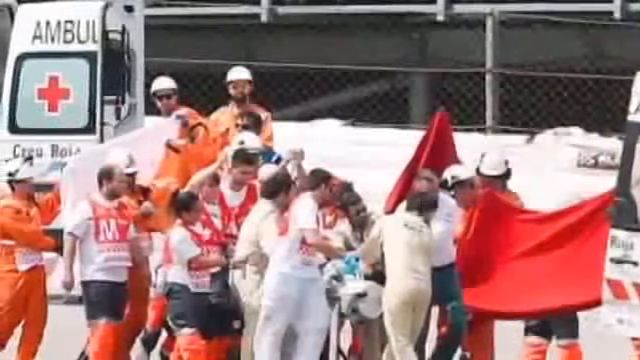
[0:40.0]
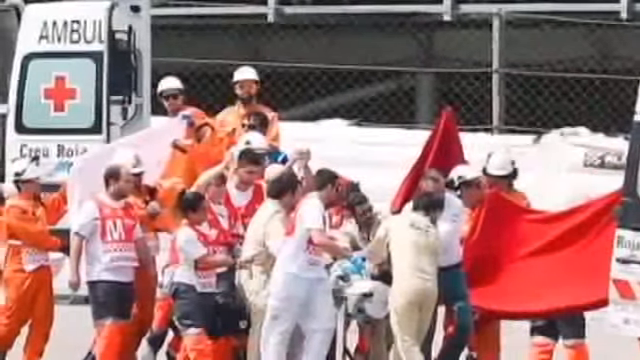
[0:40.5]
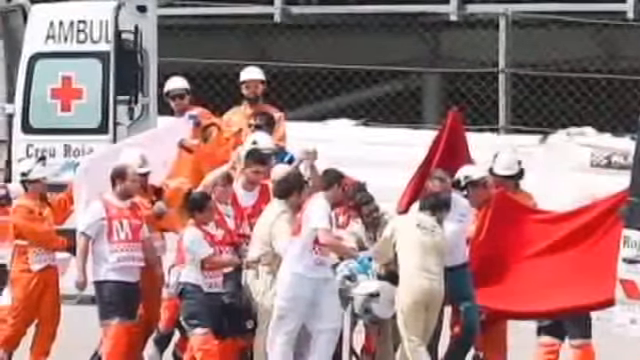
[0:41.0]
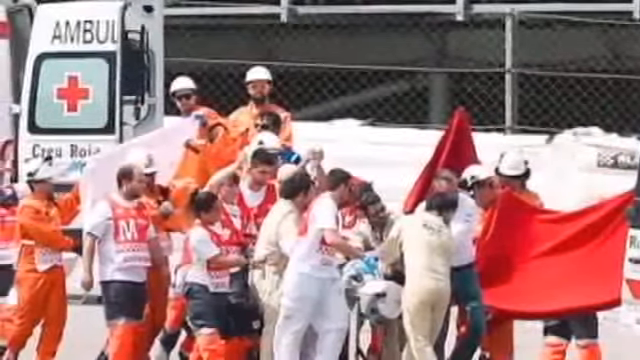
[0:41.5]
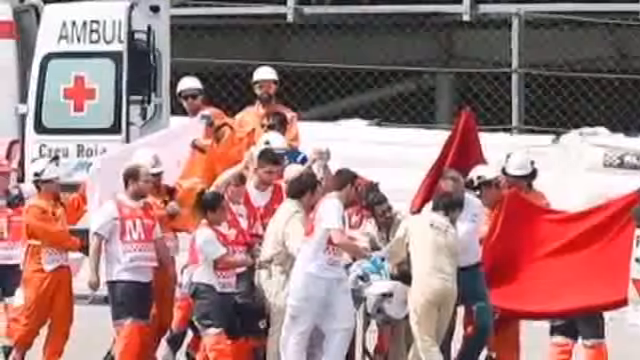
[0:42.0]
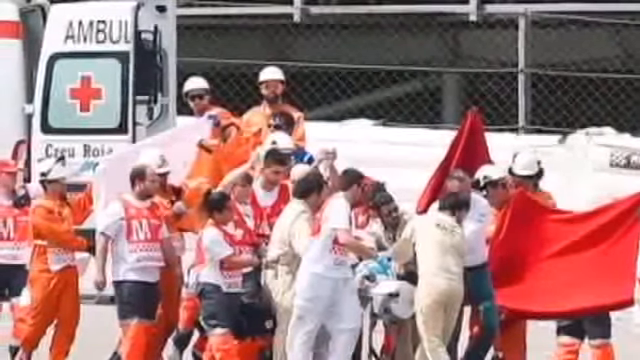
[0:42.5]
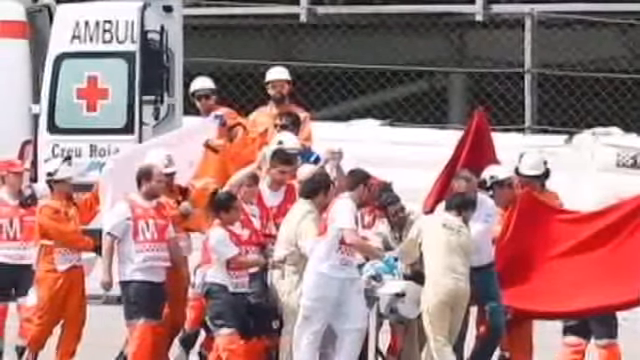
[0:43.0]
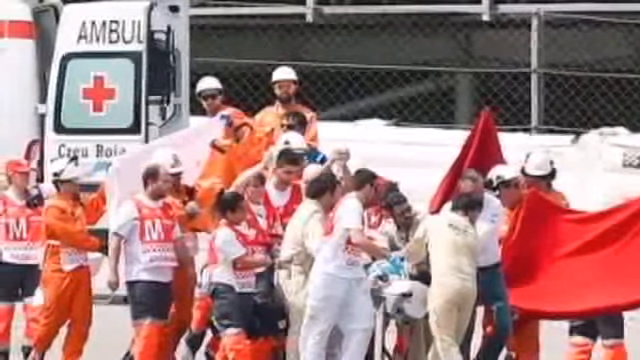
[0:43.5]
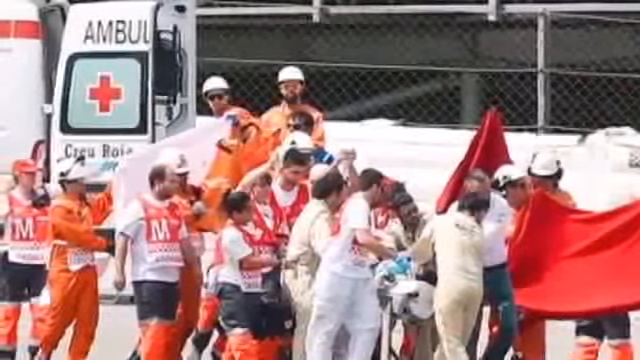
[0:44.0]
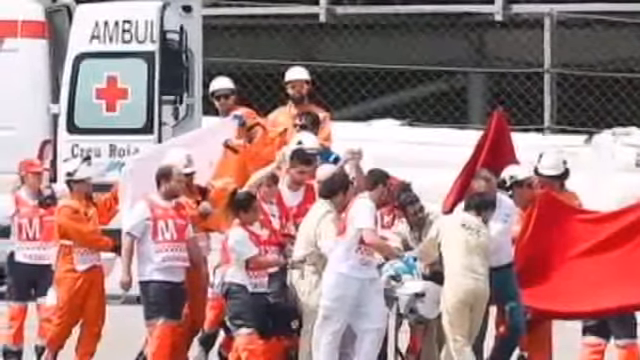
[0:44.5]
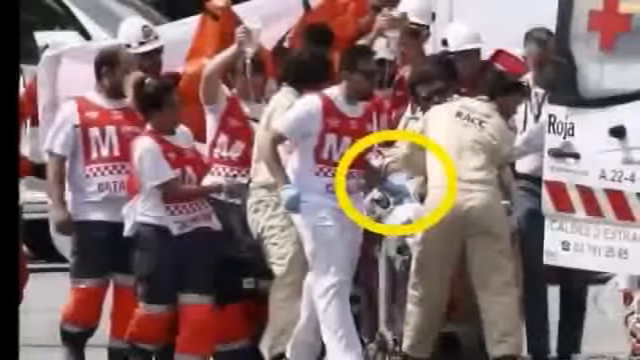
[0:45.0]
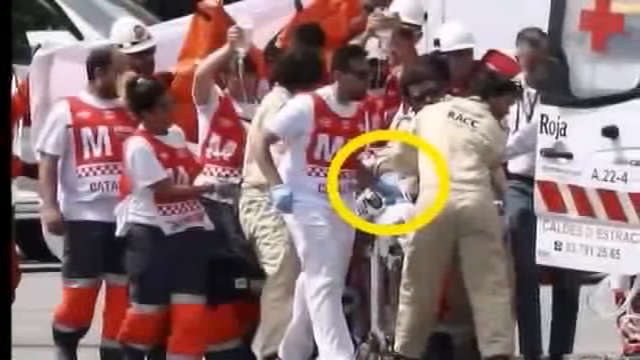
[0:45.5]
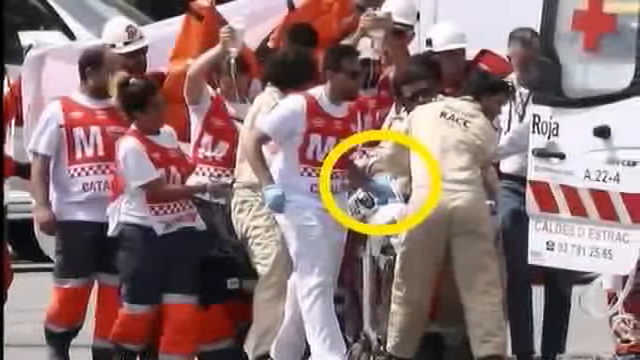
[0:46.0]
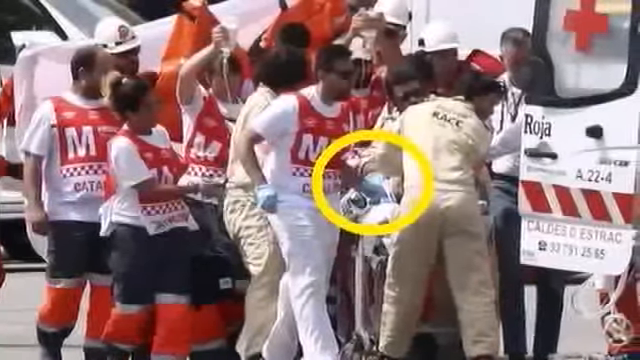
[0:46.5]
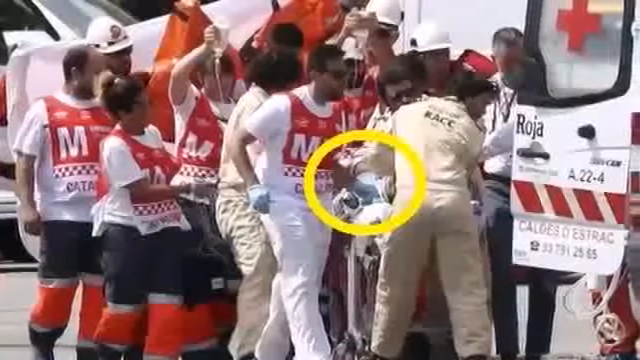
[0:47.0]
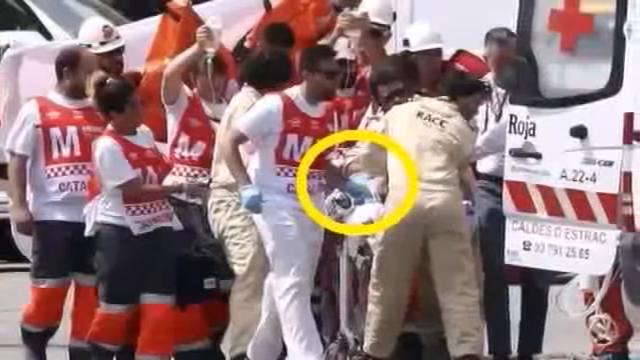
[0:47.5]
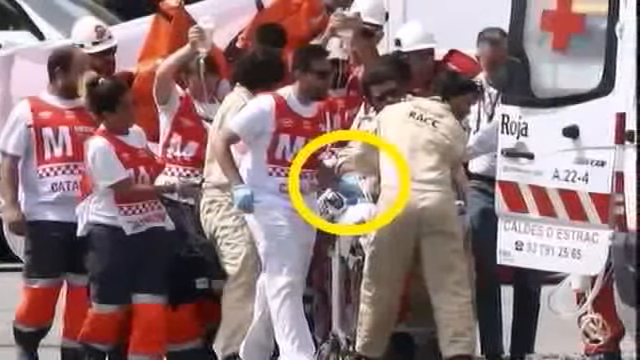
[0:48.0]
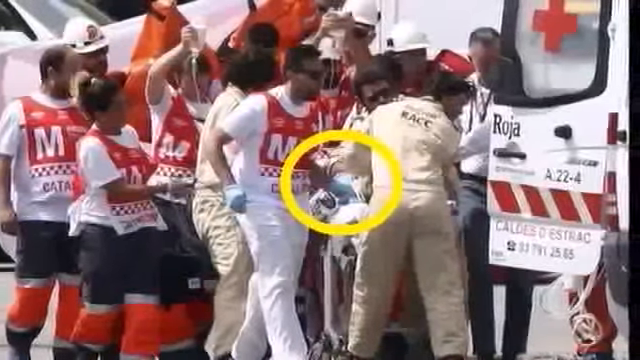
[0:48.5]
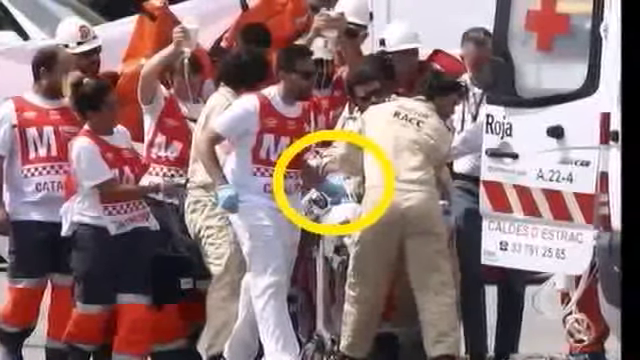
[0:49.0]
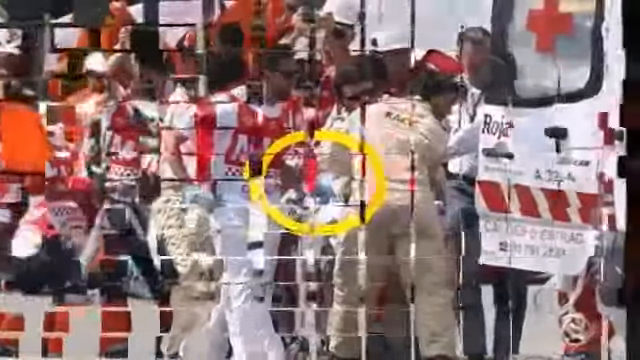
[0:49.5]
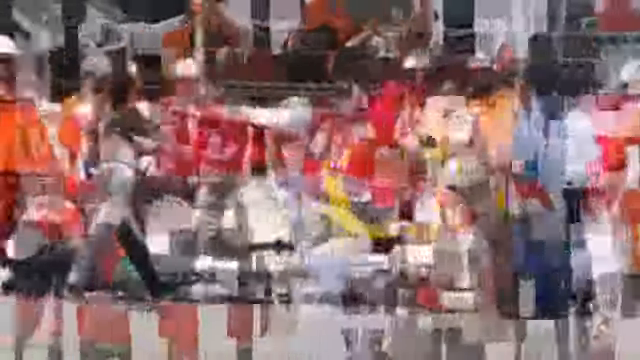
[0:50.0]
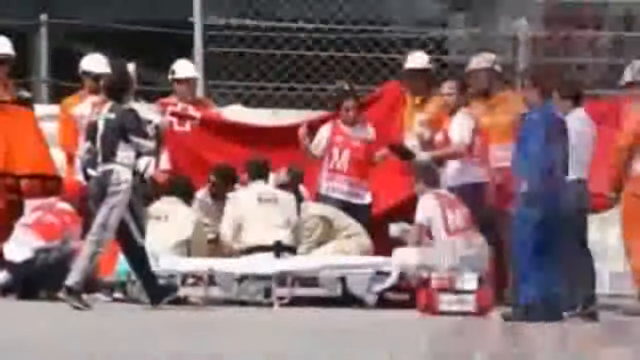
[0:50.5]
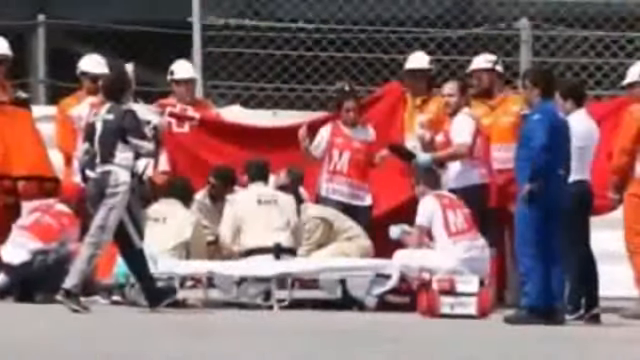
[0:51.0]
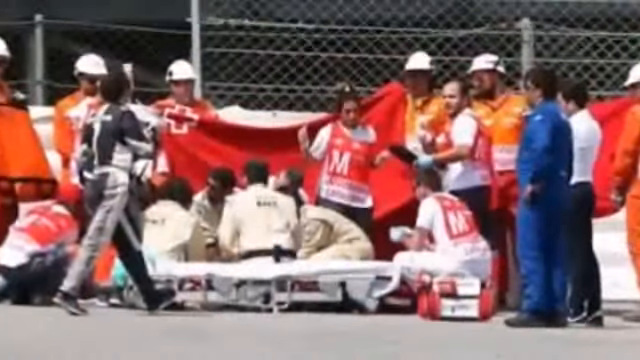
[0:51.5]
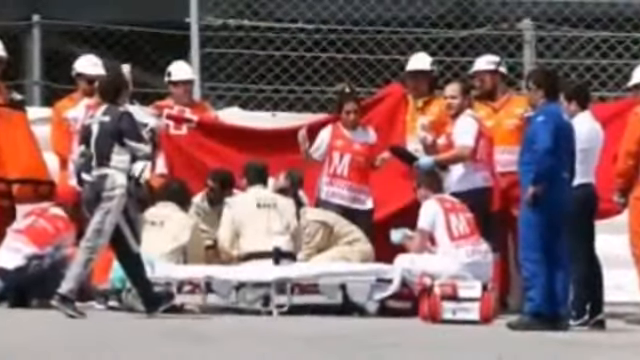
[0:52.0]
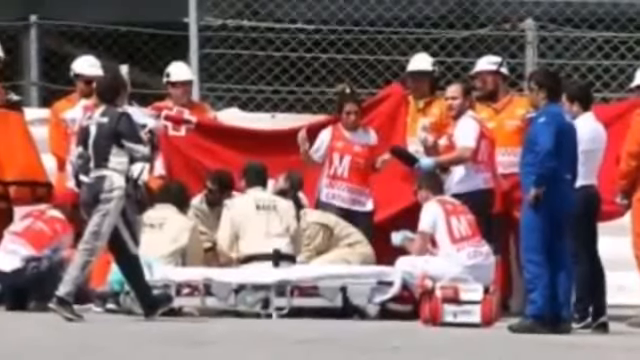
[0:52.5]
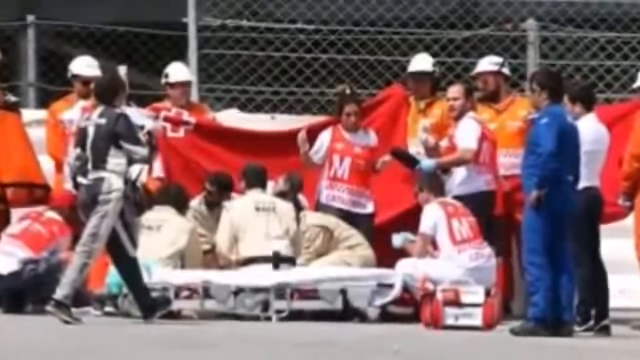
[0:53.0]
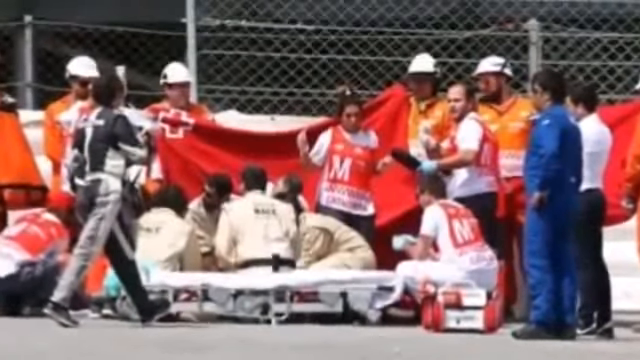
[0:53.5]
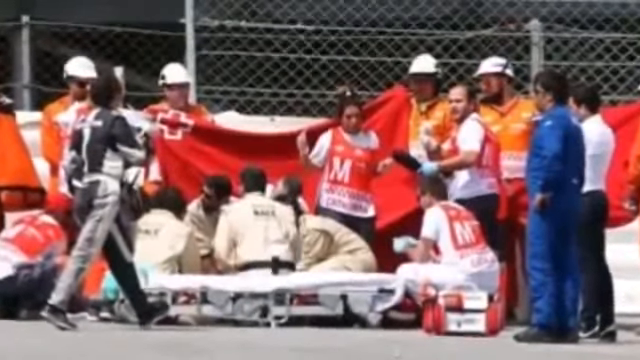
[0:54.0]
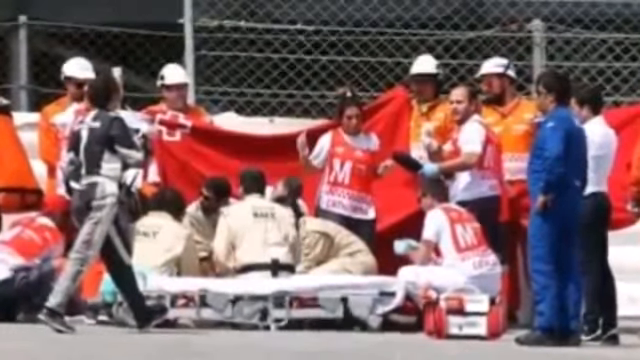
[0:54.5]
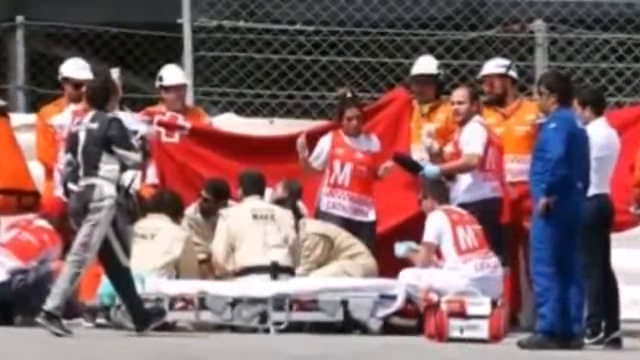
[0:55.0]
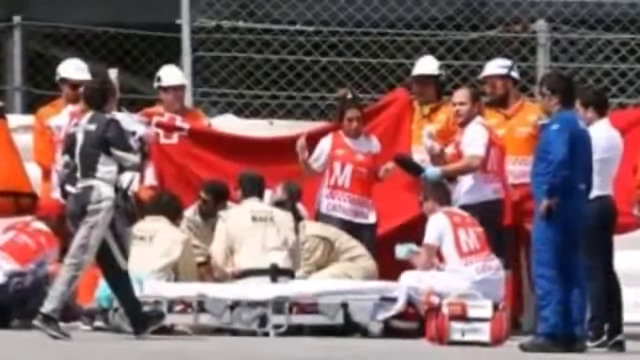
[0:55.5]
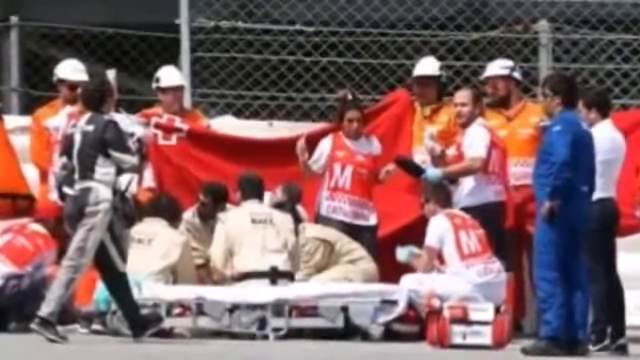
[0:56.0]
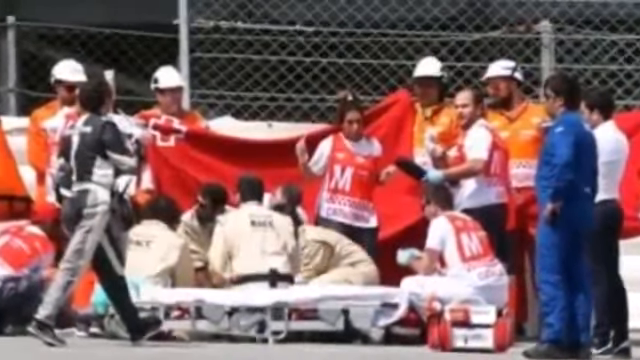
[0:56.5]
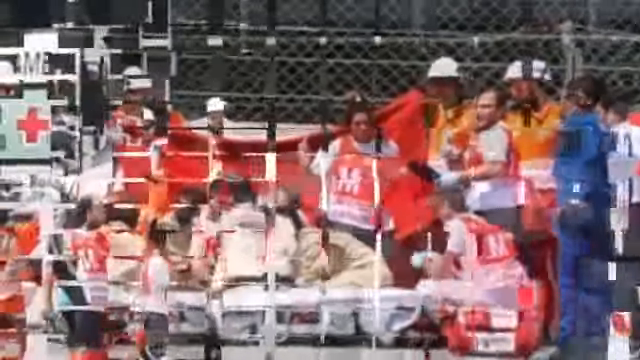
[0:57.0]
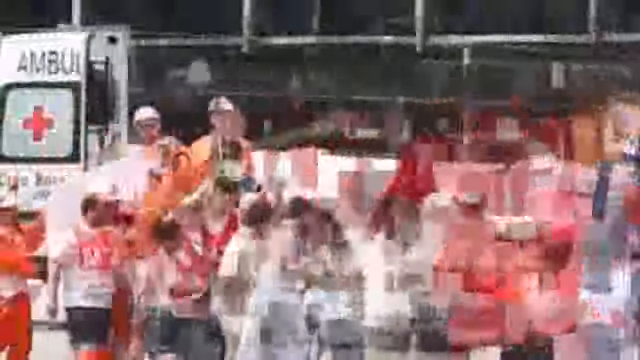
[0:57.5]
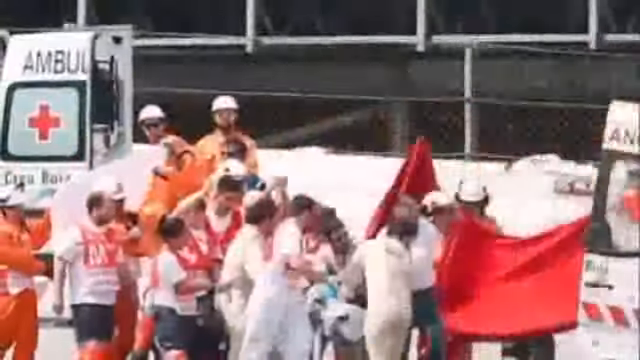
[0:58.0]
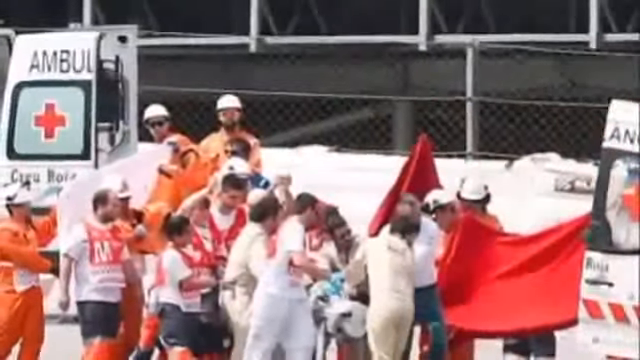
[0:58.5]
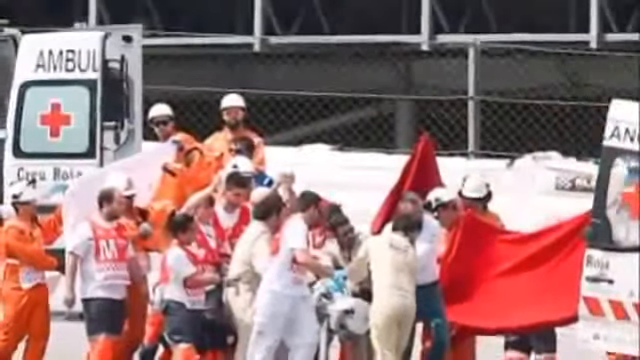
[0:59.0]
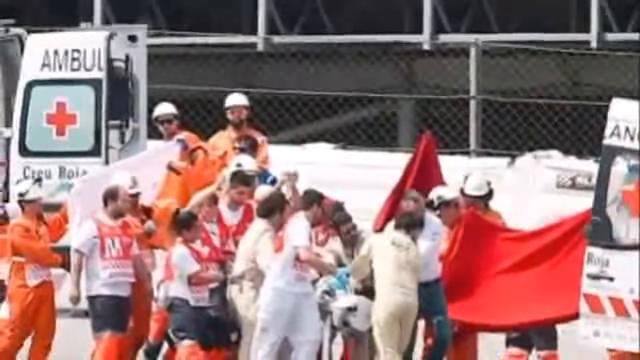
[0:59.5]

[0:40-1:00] The camera pans across the left side of a still image as medical personnel keep working. The circle reappears on the injured person as they are being put into an ambulance. A checkerboard cut returns to what looks like the beginning of the medical personnel helping the person. The last image shows more medical personnel and staff working on the person. Ambulances are in the background on the left and right sides, and the person appears to be wheeled into the ambulance on the right side of the screen. A fence is in the background, and the place looks like a race course. People in orange suits with hard hats, probably workers at the facility, are there along with the medical staff. On the right side there is something big and red that looks like a flag but is not one.